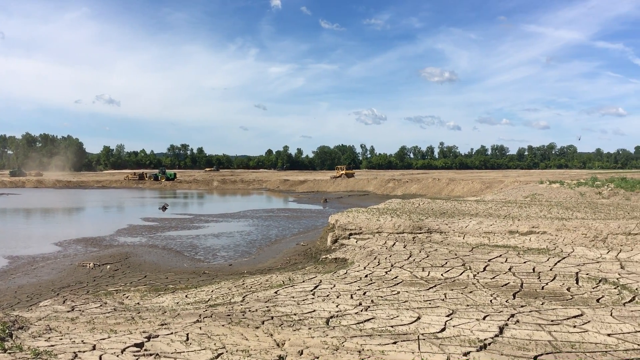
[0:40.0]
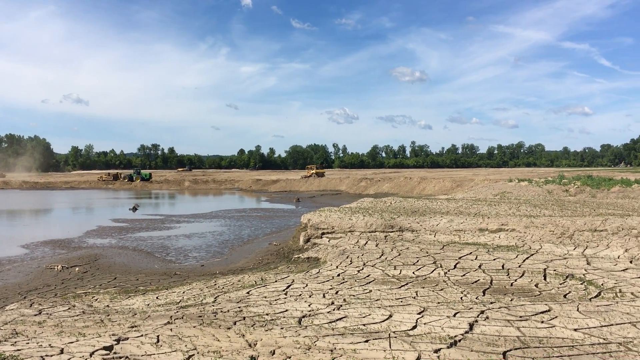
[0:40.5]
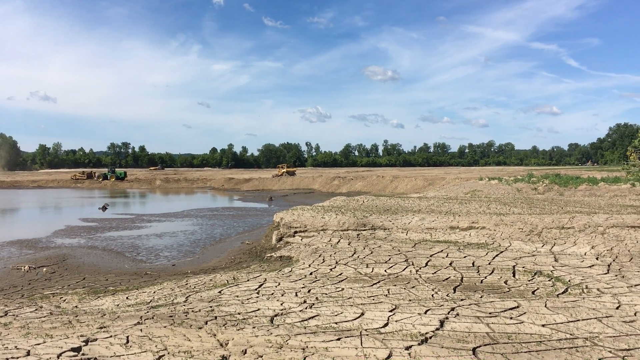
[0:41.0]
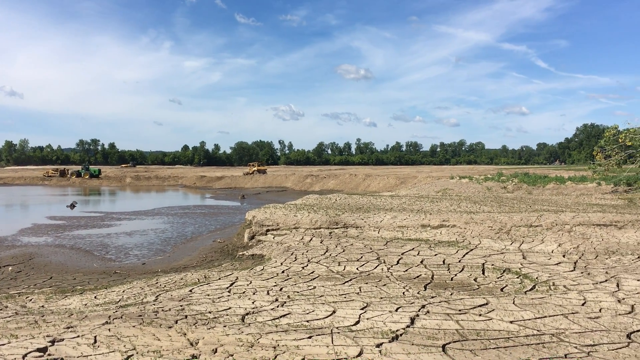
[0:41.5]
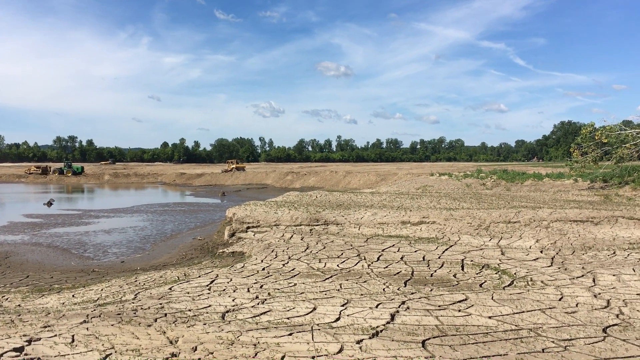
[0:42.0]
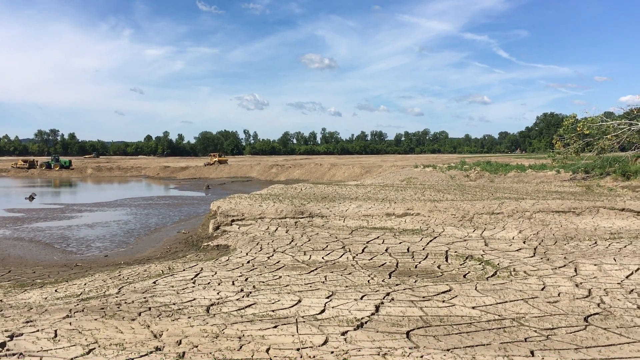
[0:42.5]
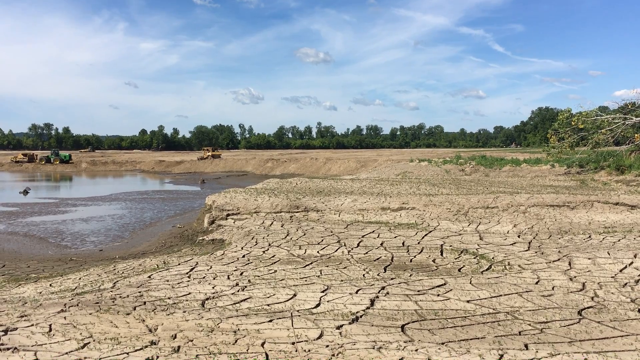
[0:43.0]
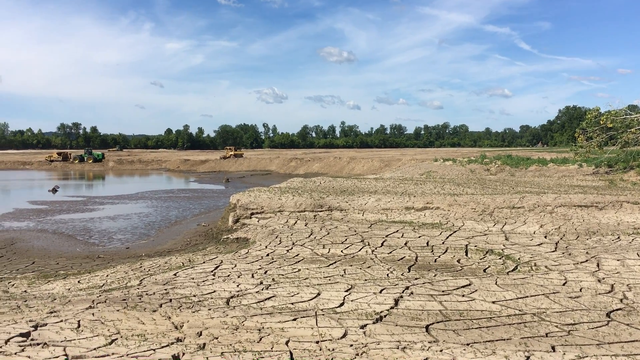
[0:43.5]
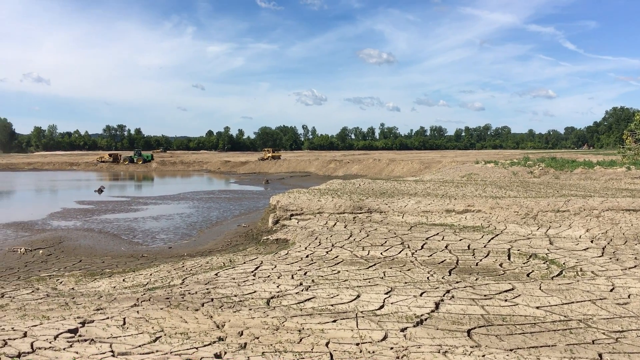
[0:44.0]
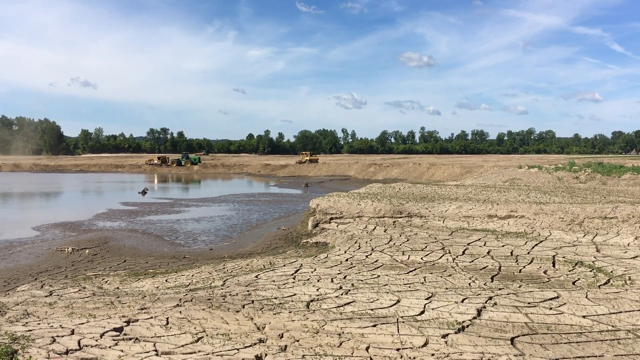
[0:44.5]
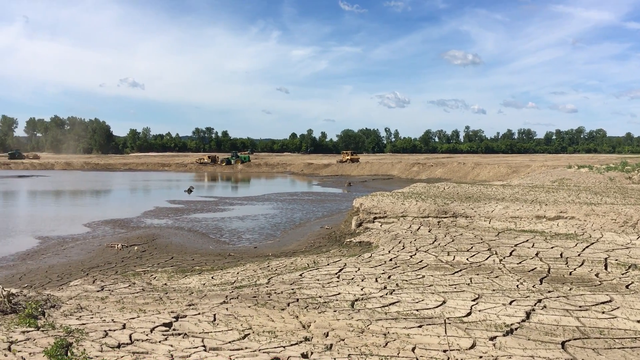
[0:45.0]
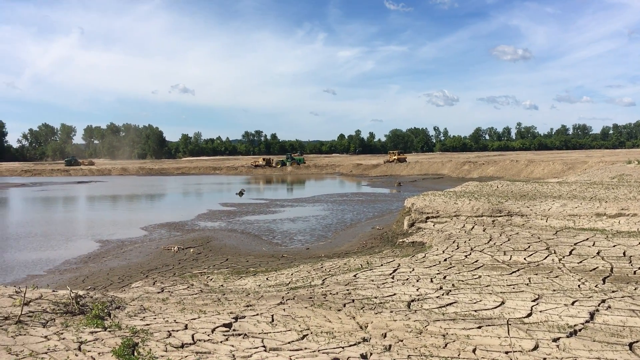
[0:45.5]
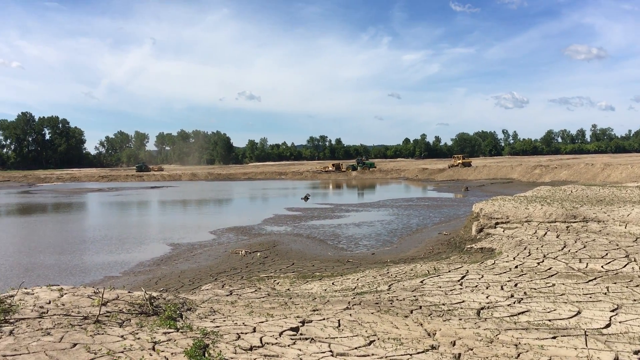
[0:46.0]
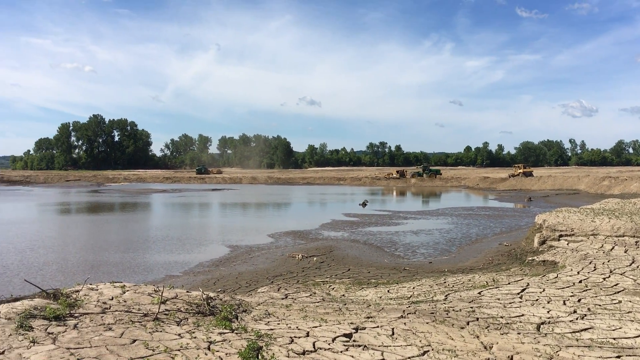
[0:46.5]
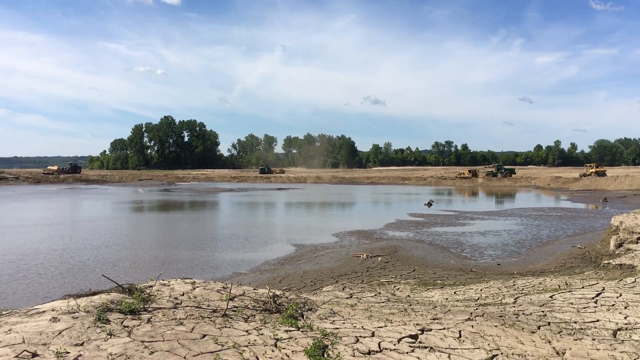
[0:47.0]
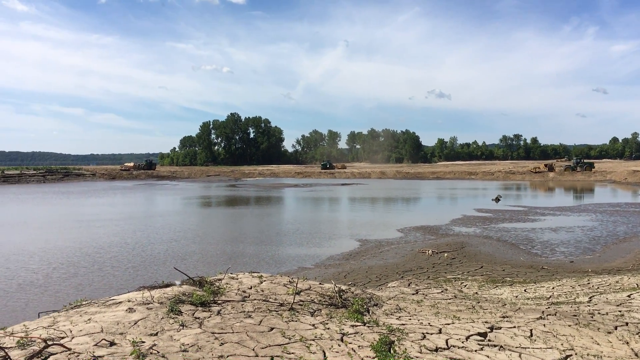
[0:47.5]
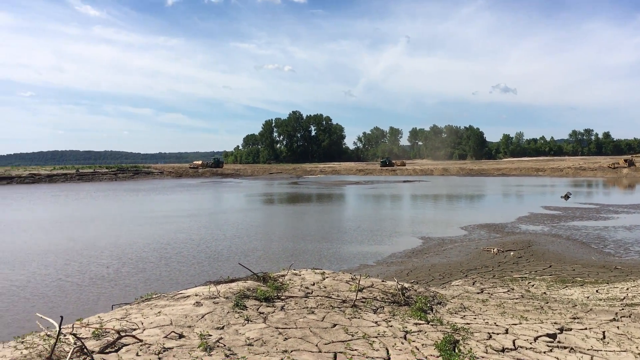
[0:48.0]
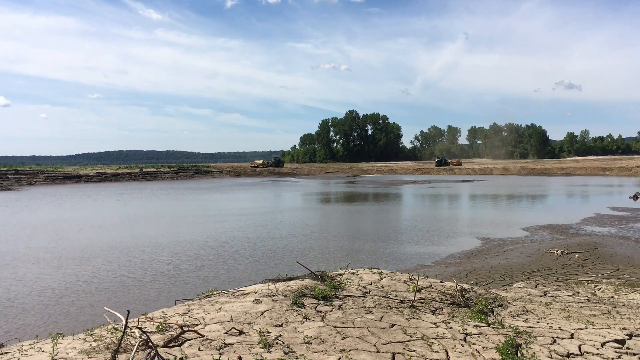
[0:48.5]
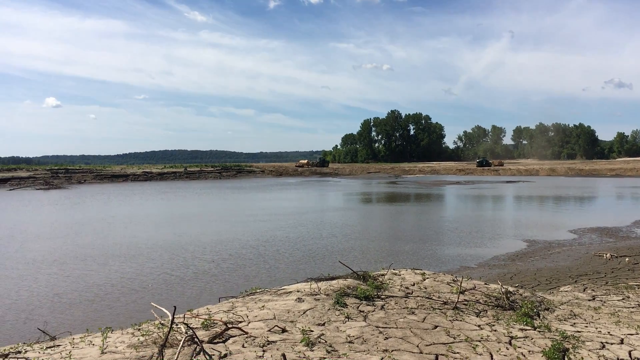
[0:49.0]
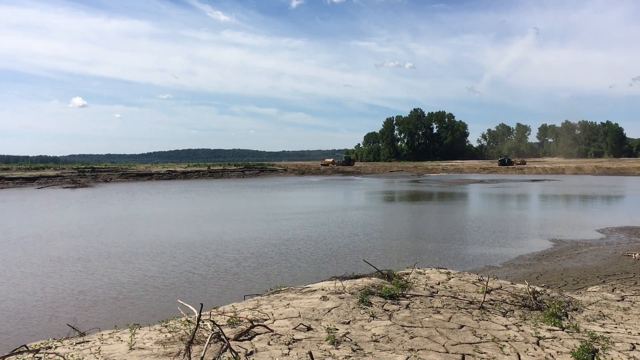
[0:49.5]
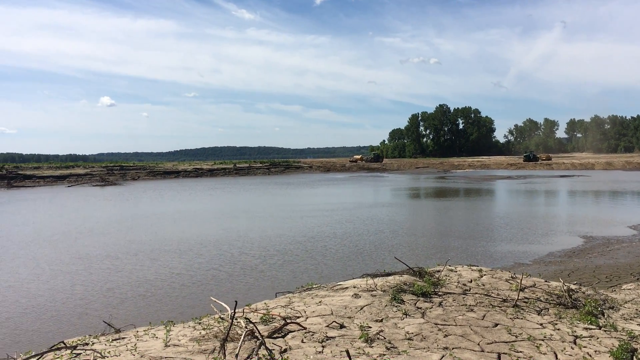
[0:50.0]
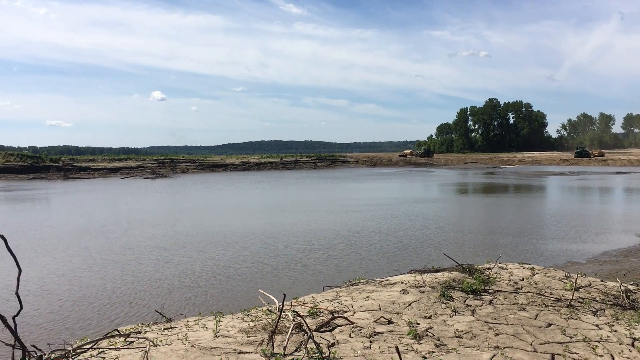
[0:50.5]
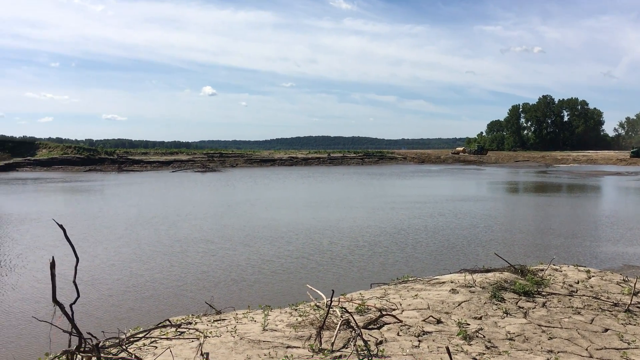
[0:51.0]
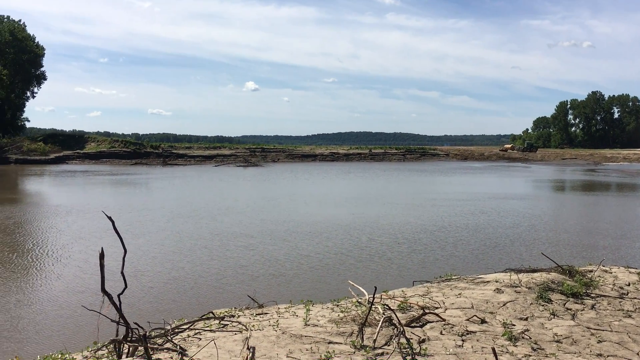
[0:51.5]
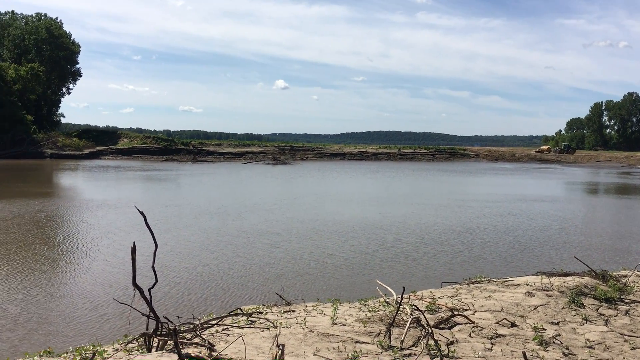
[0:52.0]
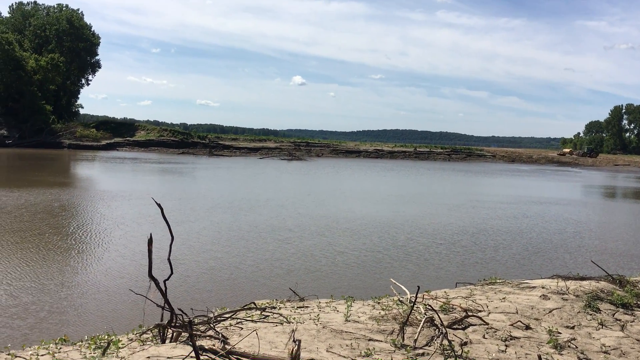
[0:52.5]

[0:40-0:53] The ground extends toward a cleared area where there appear to be dead trees and a knocked-over tree touching the ground, with only a slight patch of greenery by that tree. It is unclear whether the tree was knocked over by clearing work or by something natural such as a fire. In the background is a bunch of what look like the same trees, almost like a forest. The video then ends.